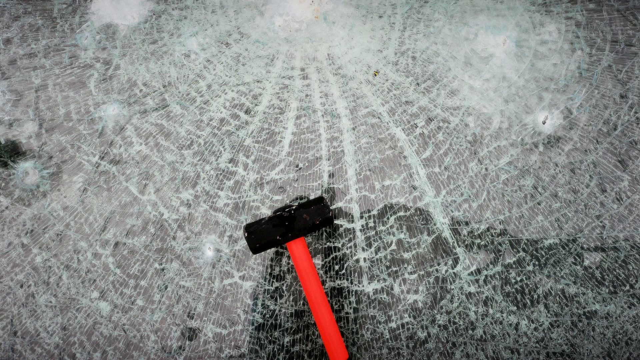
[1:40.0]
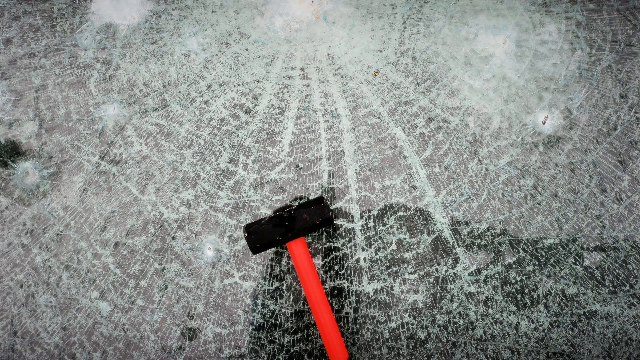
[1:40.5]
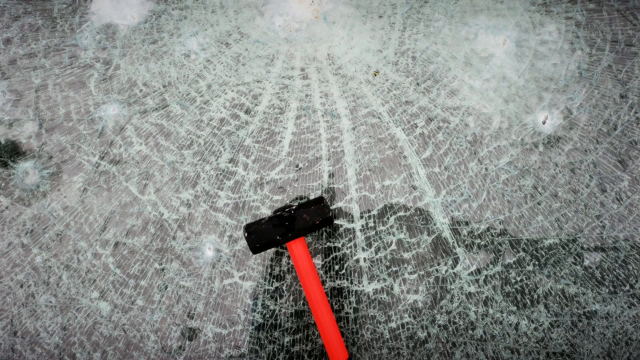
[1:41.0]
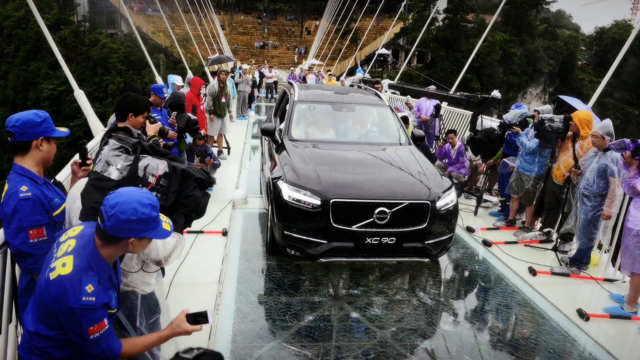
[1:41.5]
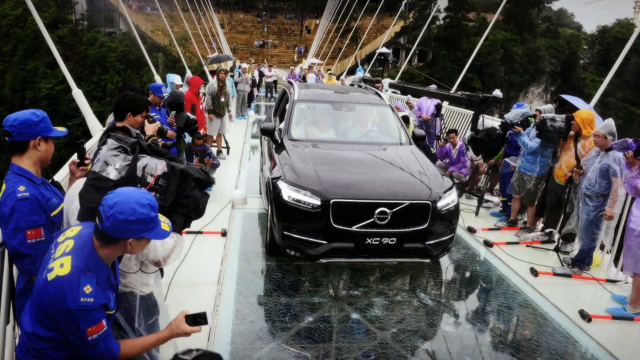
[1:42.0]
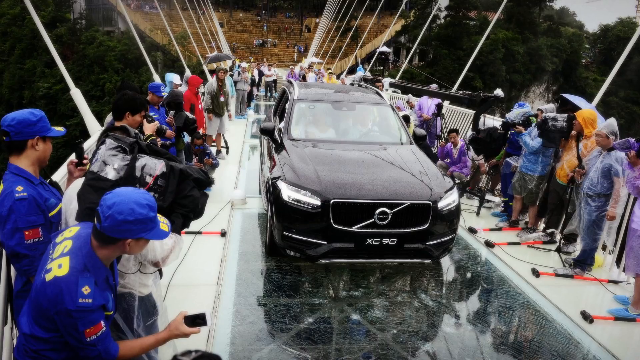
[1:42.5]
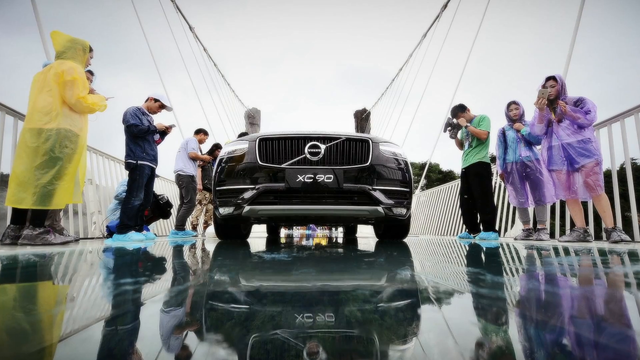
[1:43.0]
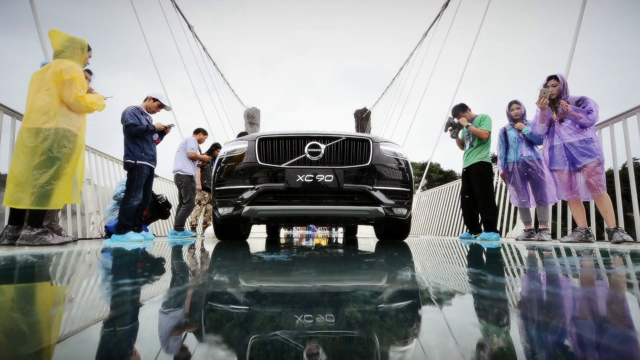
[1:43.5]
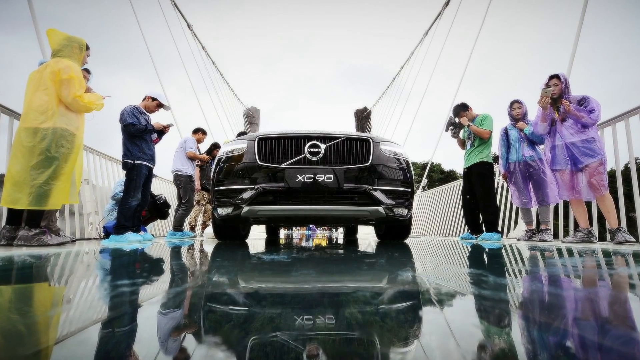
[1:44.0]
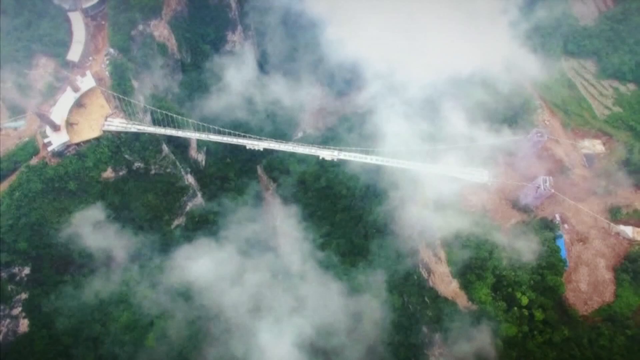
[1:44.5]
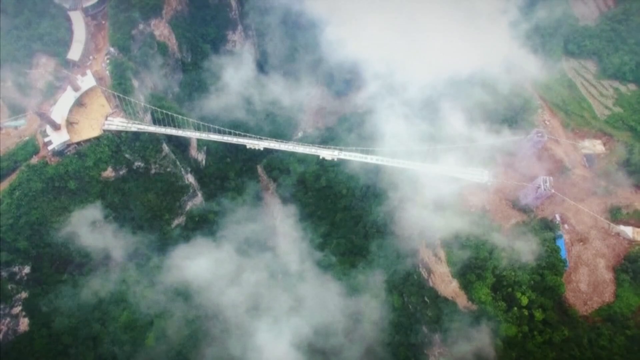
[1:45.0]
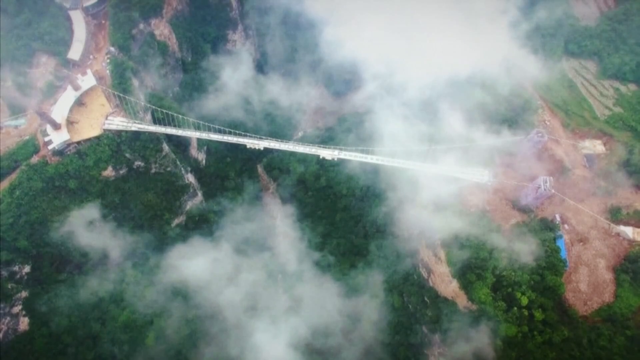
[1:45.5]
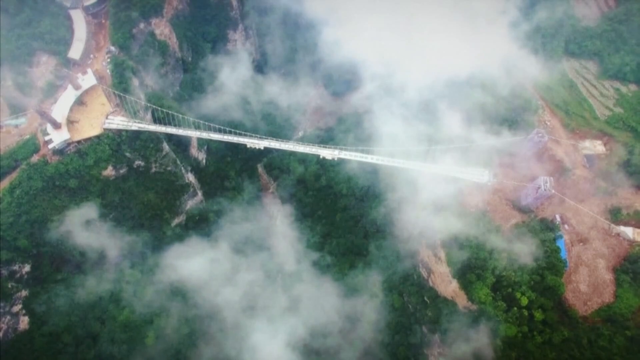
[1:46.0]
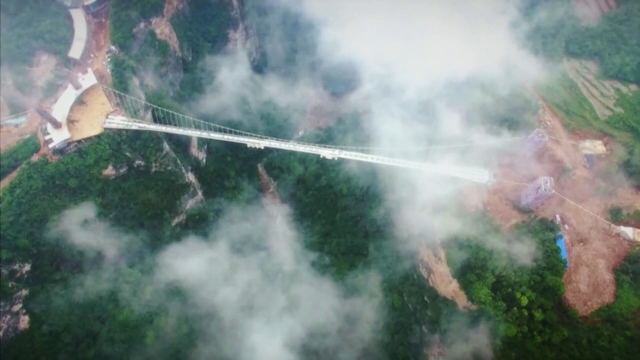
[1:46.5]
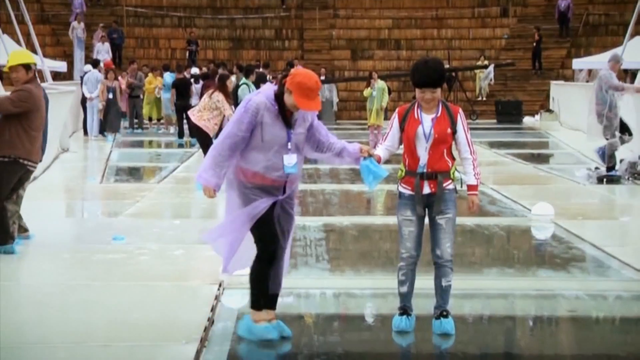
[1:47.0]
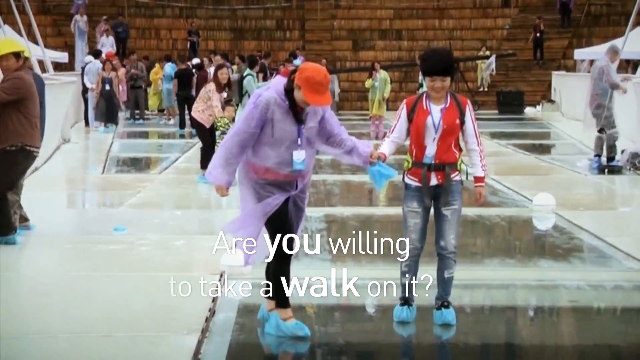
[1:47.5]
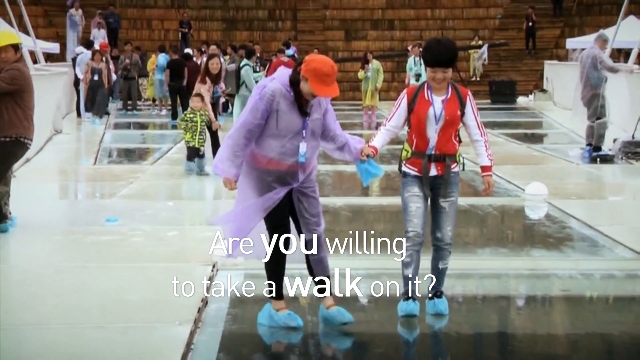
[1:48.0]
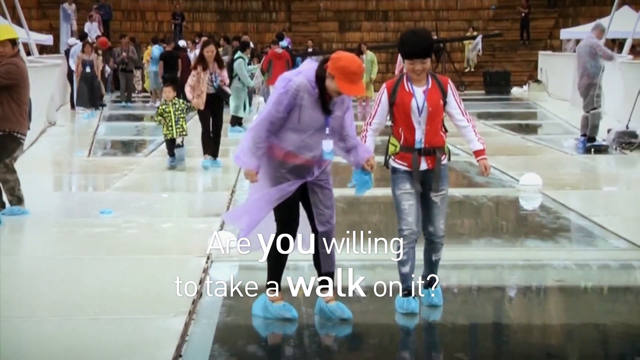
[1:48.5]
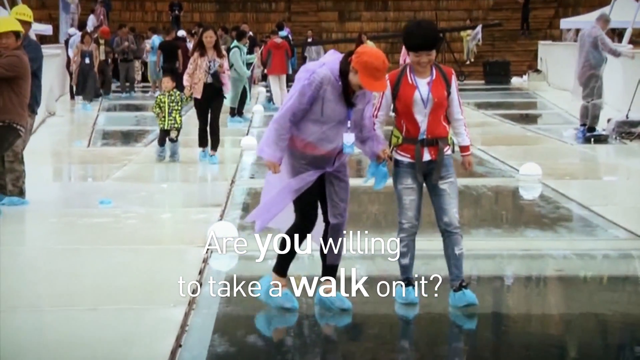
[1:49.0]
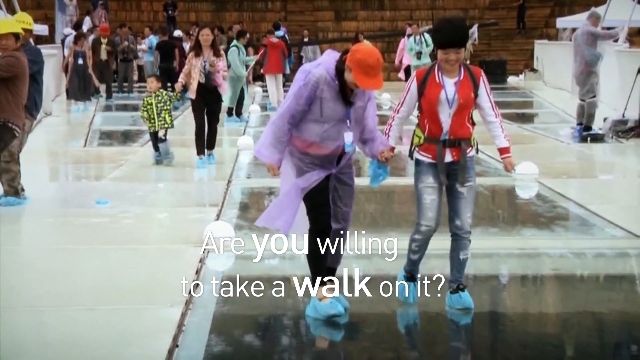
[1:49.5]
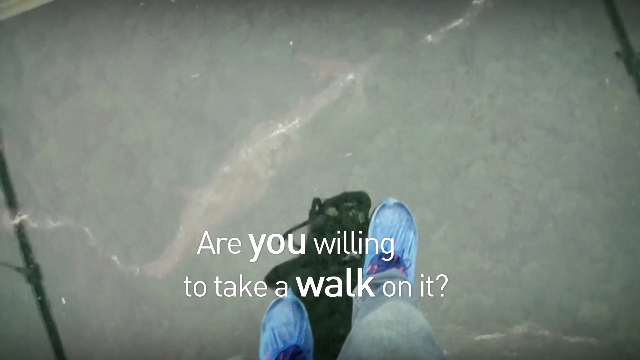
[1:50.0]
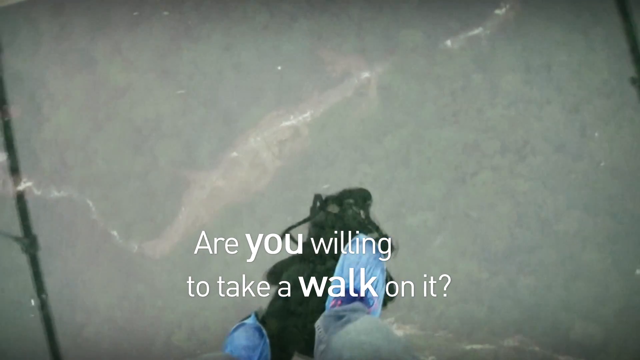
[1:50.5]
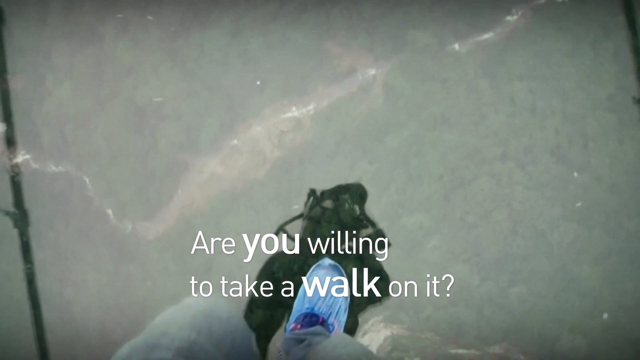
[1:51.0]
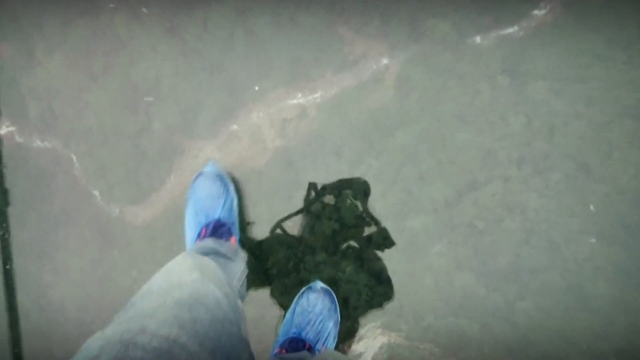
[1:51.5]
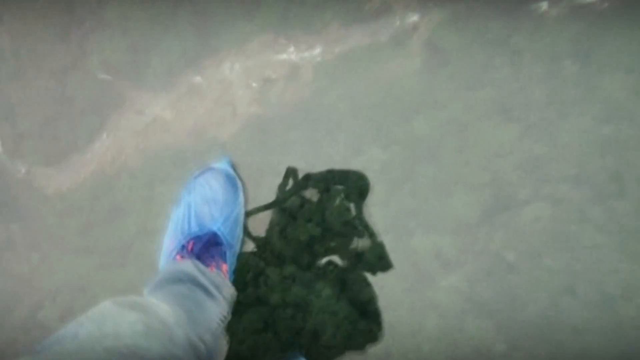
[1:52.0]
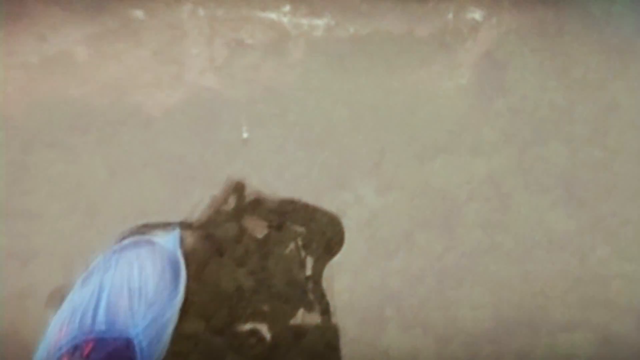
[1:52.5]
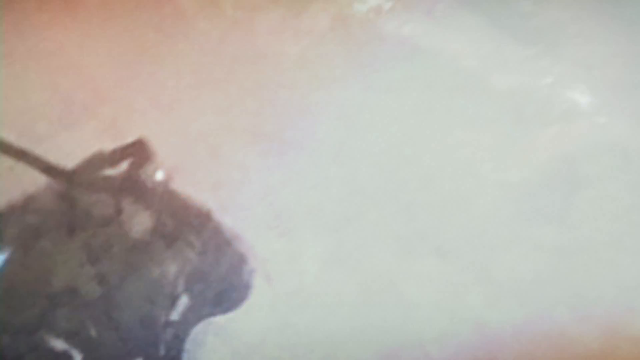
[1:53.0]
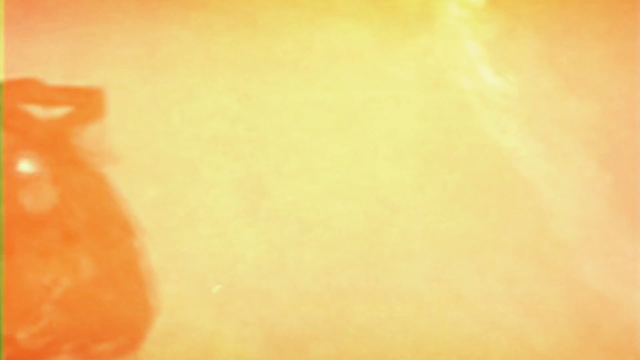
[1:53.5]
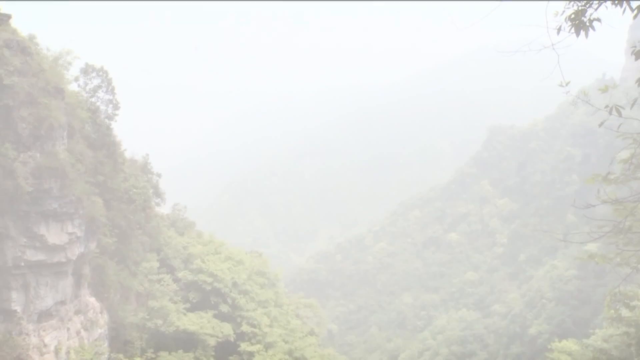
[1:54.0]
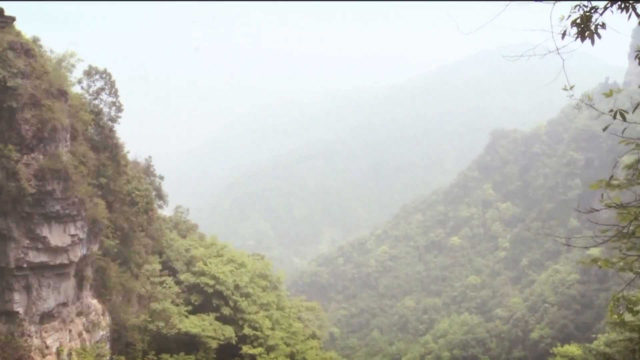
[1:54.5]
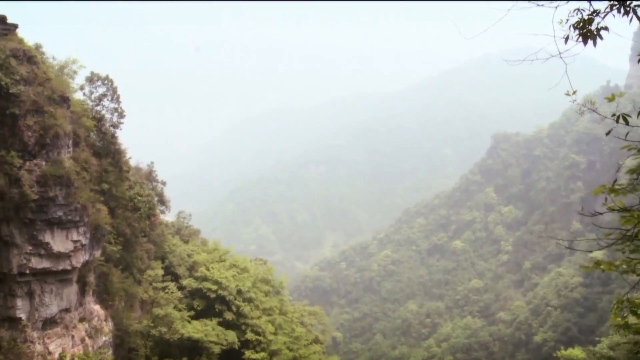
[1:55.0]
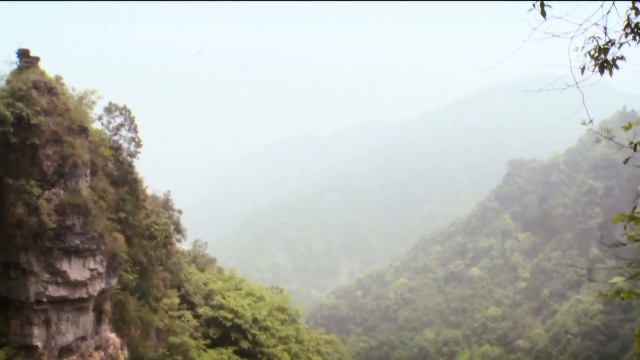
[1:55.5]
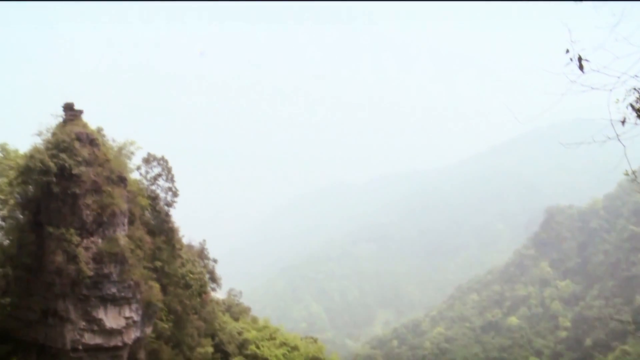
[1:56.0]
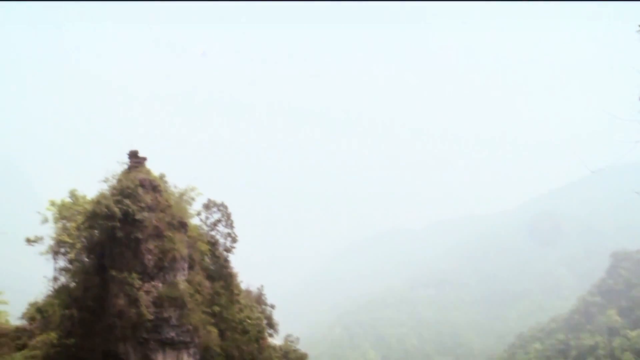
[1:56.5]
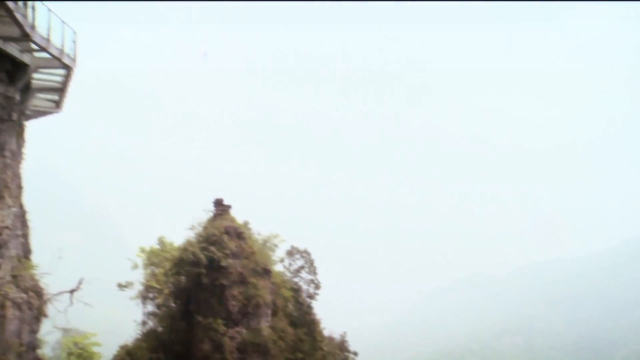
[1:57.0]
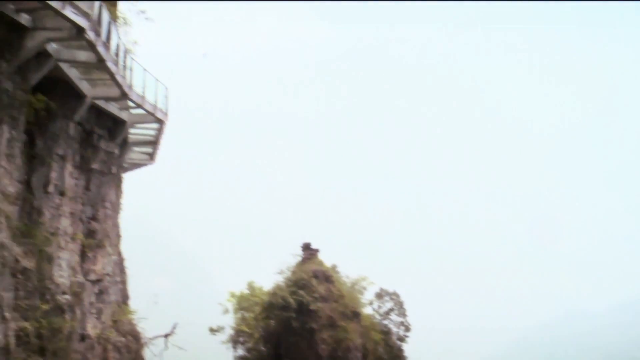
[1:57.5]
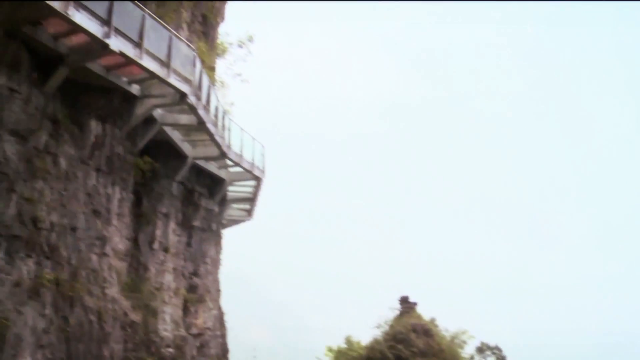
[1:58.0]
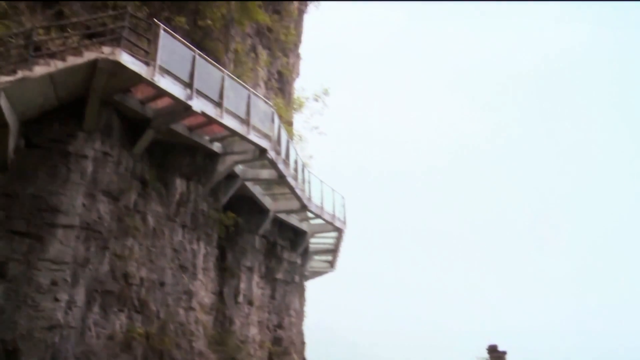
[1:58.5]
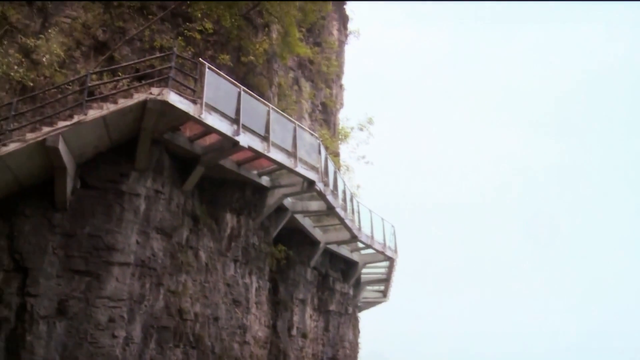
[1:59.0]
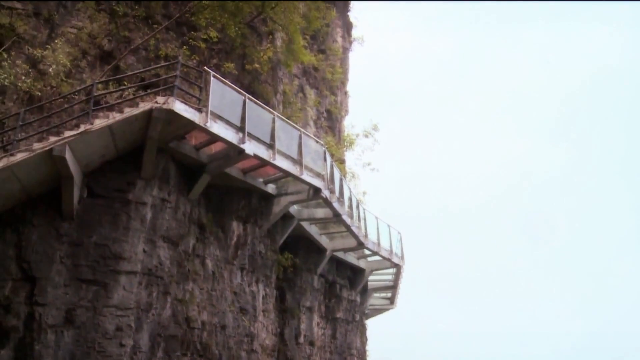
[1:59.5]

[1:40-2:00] What looks to be a hammer lies on top of broken glass. The video cuts to a photo of a nice-looking black car driving over the glass bridge. Many people are on the bridge with it, many of them wearing ponchos, and many are taking photos and videos of it. A wide drone shot takes in the entire bridge and its surroundings. Text then reads "are you willing to take a walk on it" as two people walk over the bridge with many people behind them. Next, someone records them walking over it, with the glass beneath them, and then someone records a bridge that is connected to the side of a mountain.